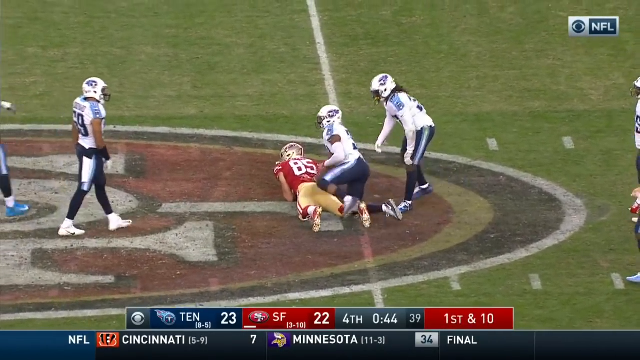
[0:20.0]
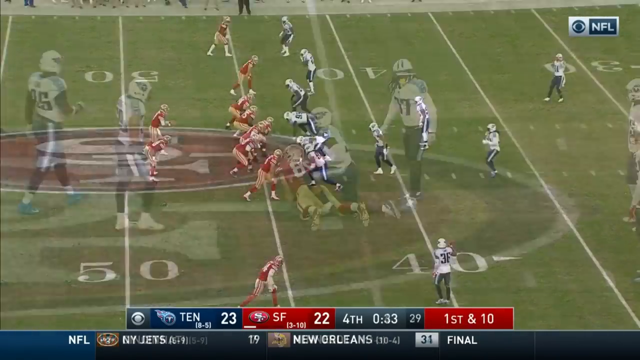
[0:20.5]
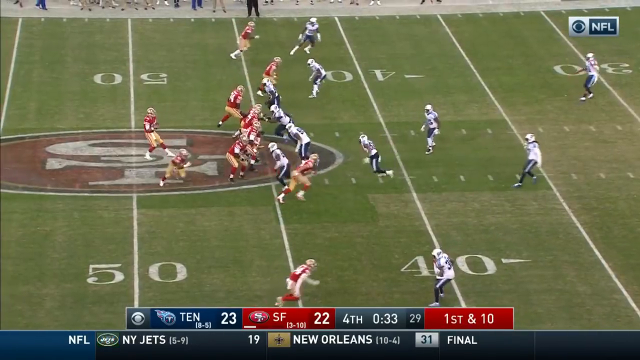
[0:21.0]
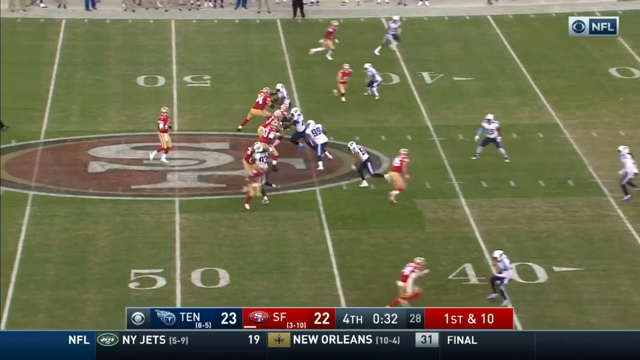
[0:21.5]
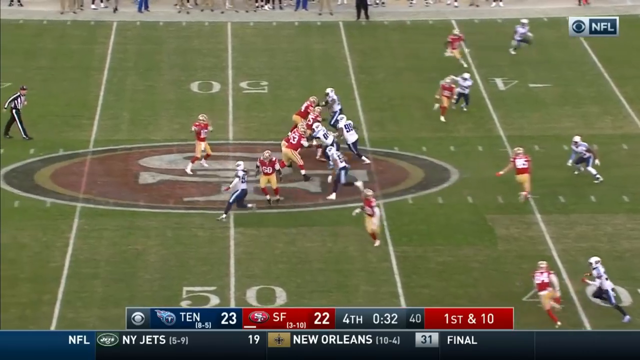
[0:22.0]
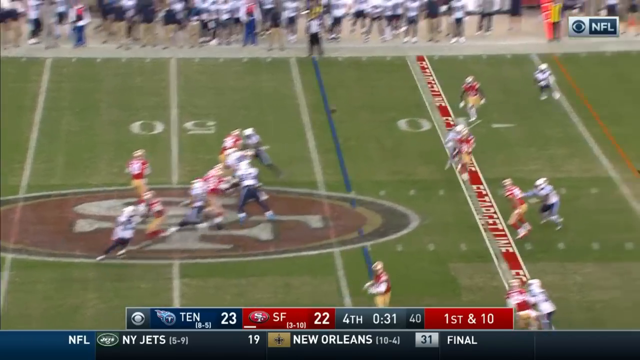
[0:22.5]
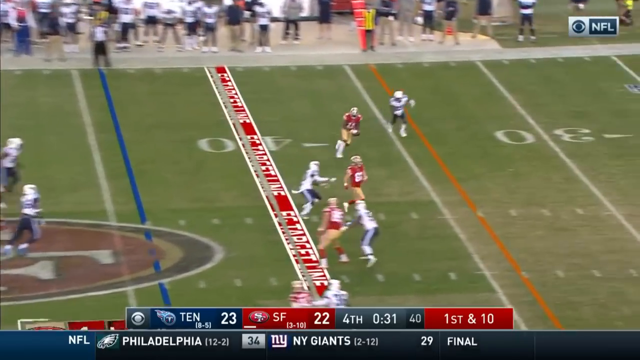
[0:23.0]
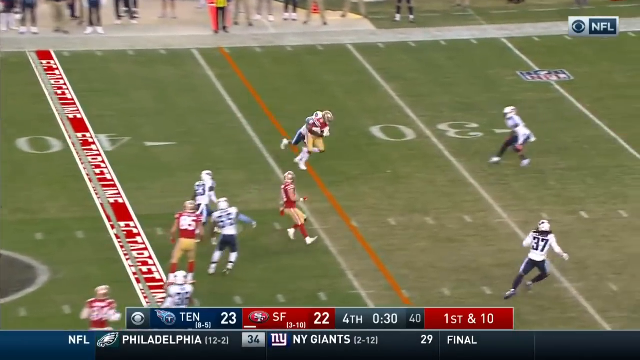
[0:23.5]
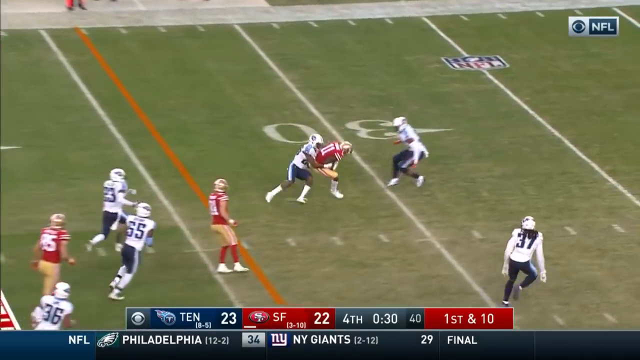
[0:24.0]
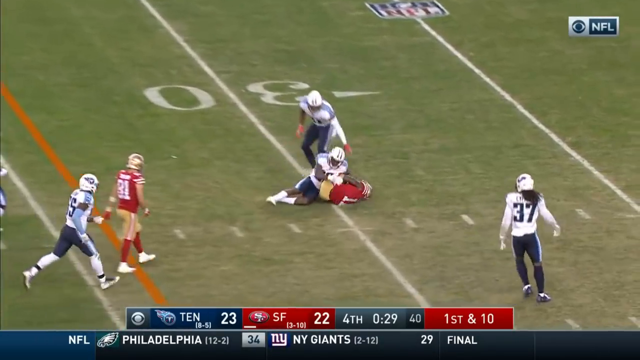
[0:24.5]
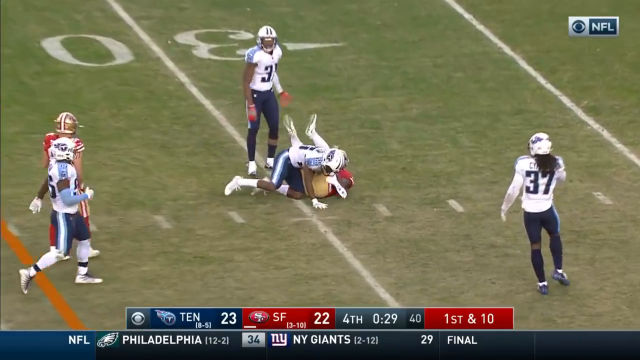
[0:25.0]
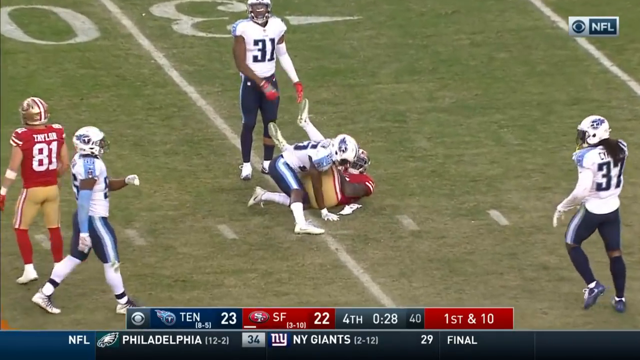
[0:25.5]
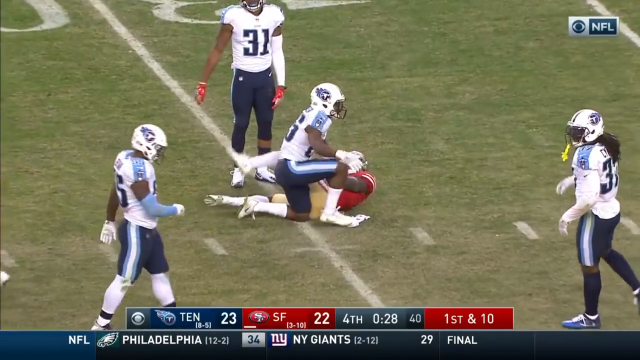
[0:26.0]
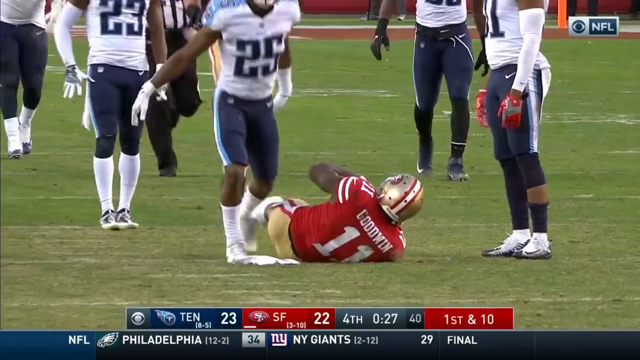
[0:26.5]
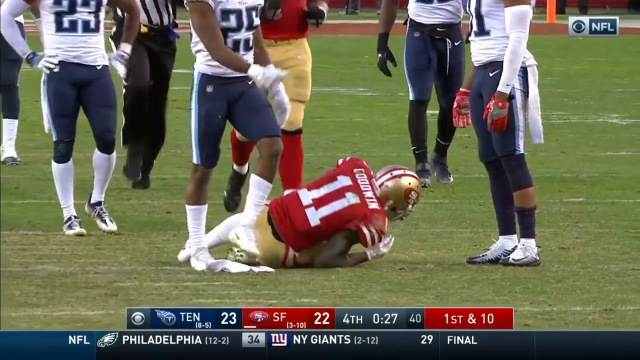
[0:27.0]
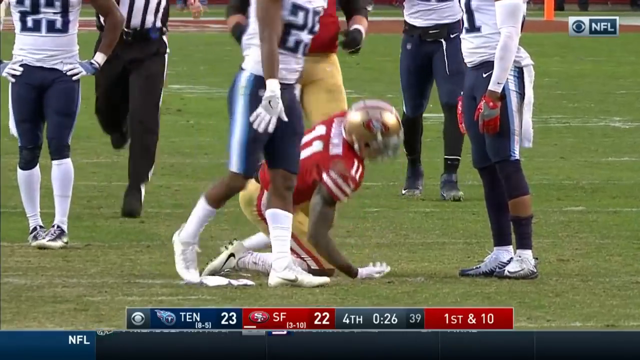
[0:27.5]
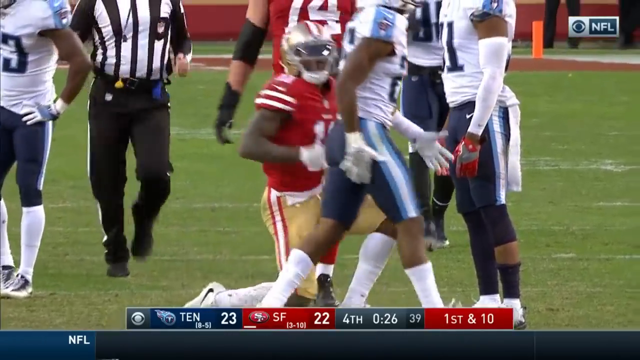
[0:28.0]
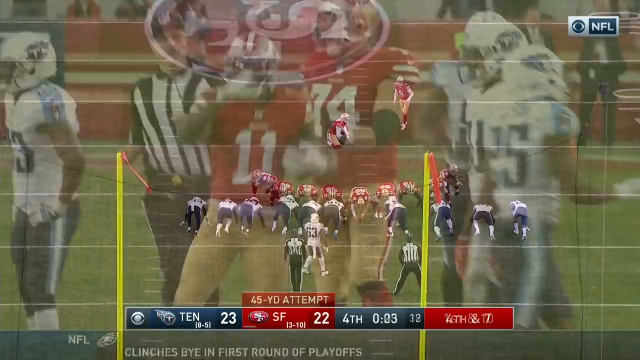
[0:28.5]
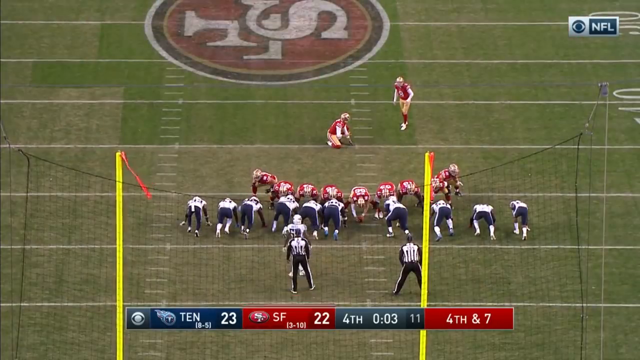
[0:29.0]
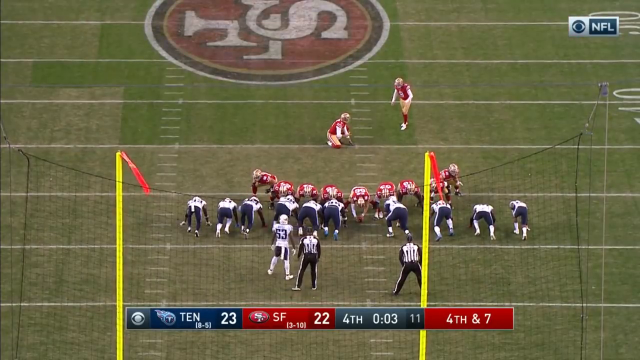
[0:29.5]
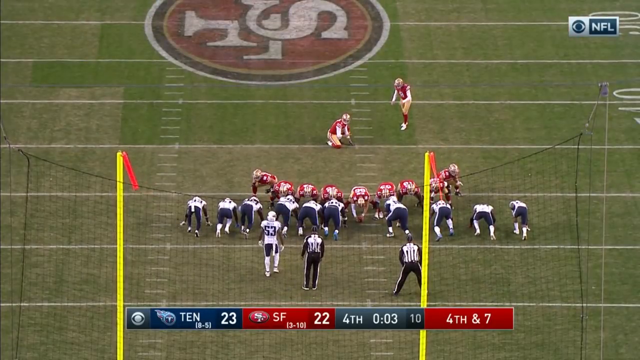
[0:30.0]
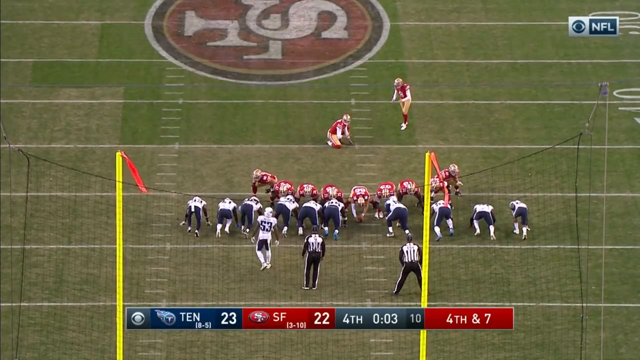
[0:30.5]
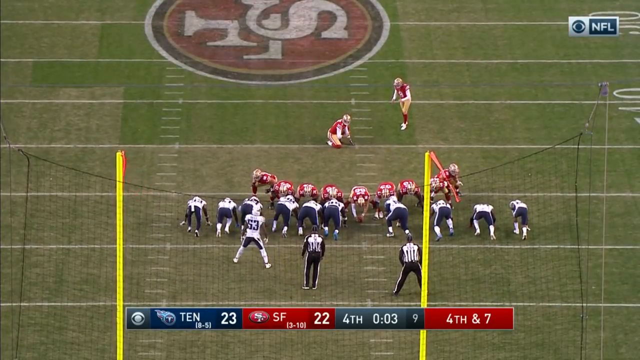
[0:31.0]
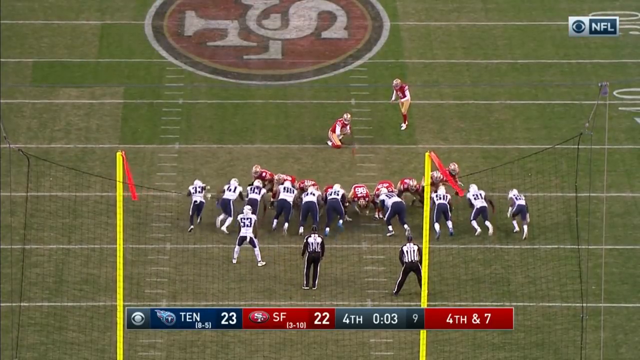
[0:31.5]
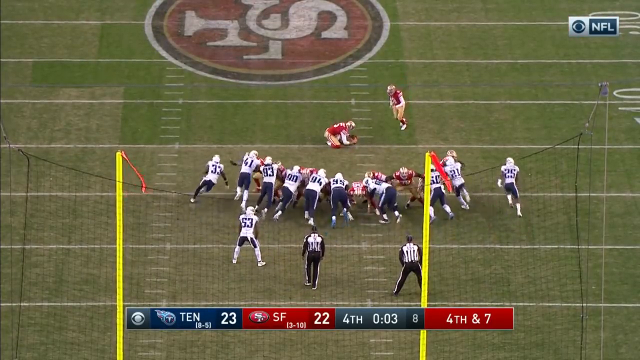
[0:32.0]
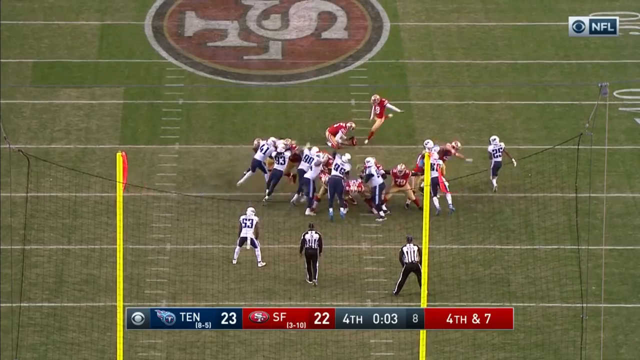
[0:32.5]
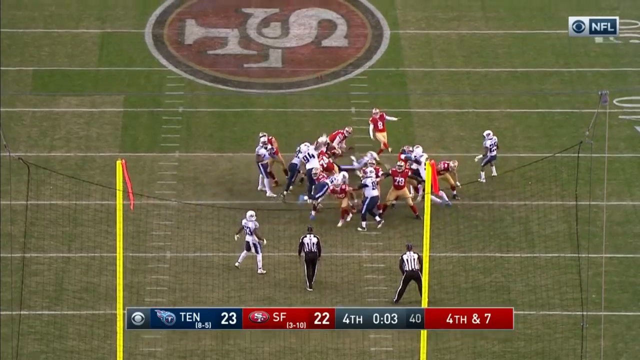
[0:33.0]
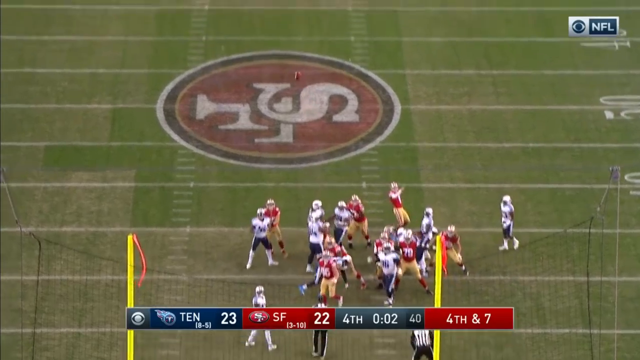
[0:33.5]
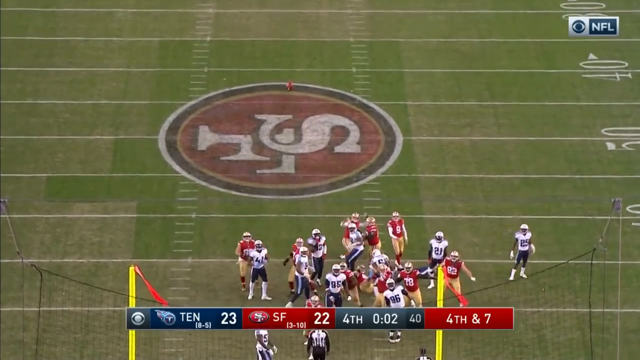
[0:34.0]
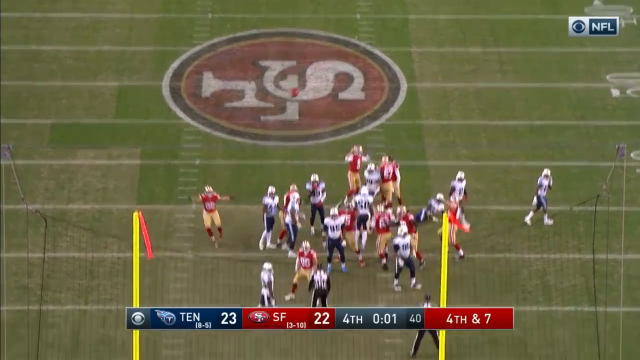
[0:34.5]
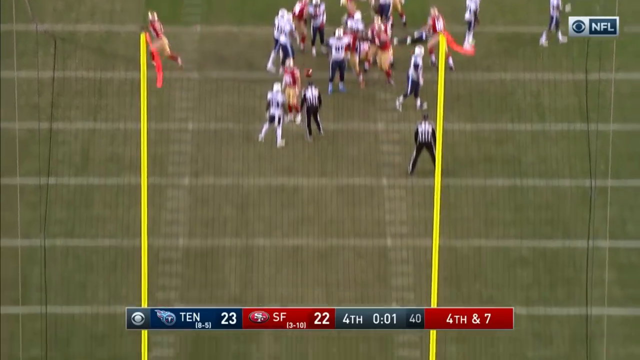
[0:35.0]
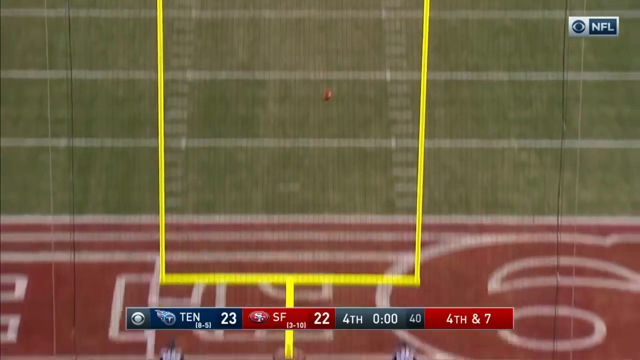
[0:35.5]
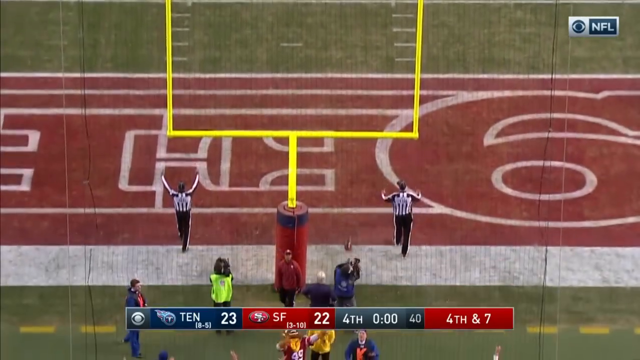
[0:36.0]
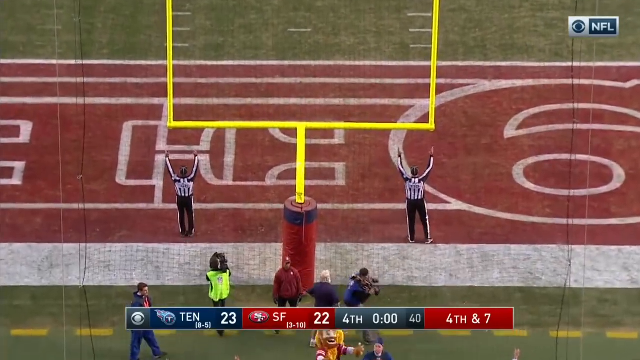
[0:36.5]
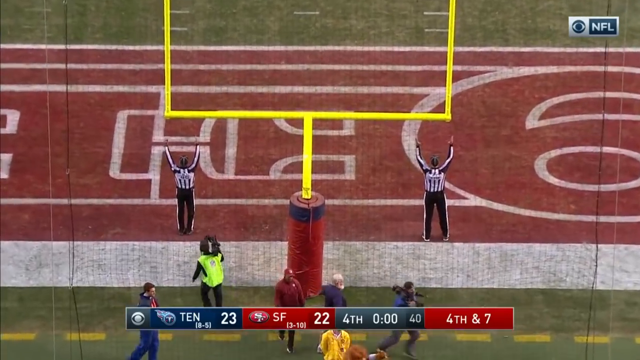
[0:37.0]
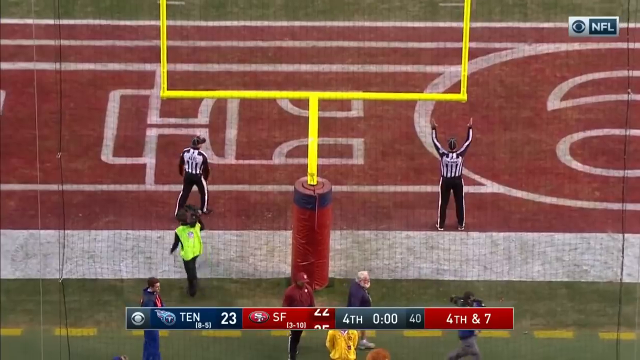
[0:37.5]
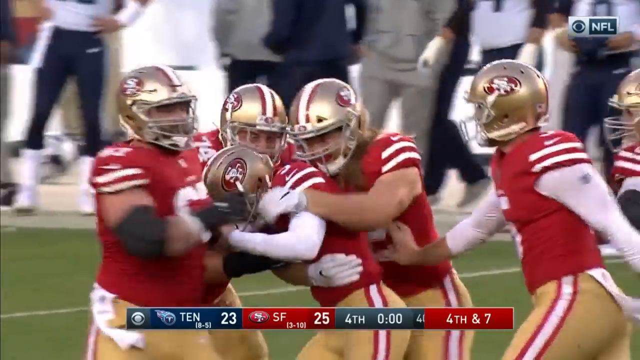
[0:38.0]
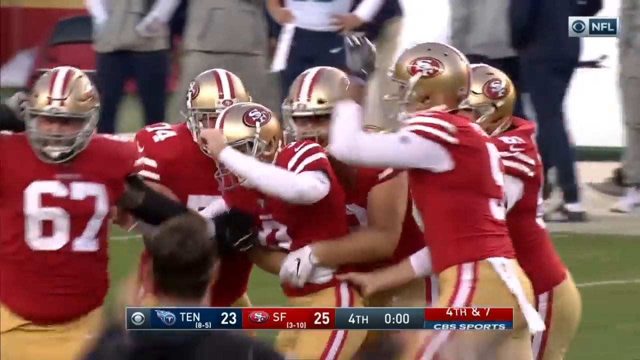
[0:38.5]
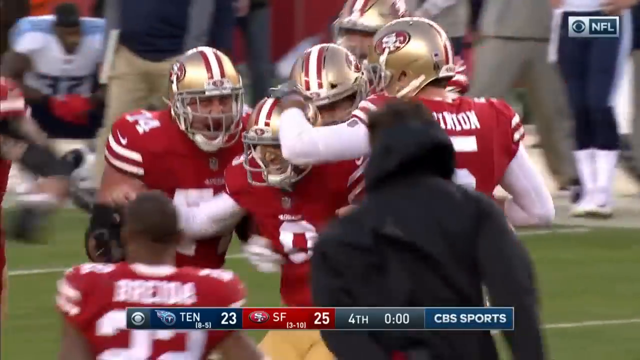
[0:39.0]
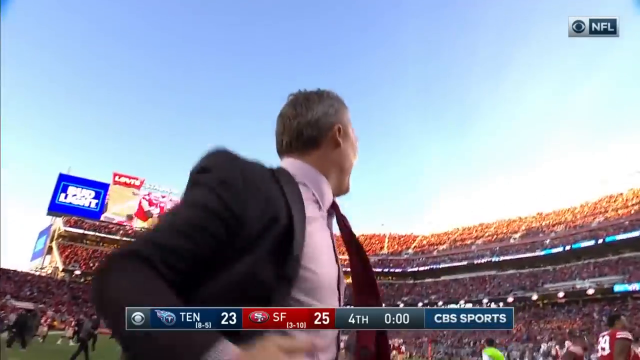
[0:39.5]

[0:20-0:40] In a football match between a team in red and a team in white, the red team have the ball in a line-out and pass it back to the quarterback. The quarterback takes a step backwards, slowly pulls back the right arm and then propels the ball forward to their left. Somebody on the left catches the ball side on, takes it to the chest, turns and runs, but a white player grabs them from behind and they go over. The player wears number 11. The video cuts to a view from behind one of the goals for a kick. A player in red stands ready to strike the ball, right foot placed behind the left foot, hands slightly in front, body slightly bent. A player kneels in front of them, holding the ball down with one hand. Between the camera and the goal are a number of players: the red players face the camera, bent forwards with their hands touching the ground, and players in white with black trousers face them, also bent down, ready to sprint forward. They are still as they await the kick. One player, wearing number 53, is behind this group, walking between the back line of the white team and the goal. The players in red stand their ground, kneeling down, trying to block the others off. The kicker moves forward to the ball, left foot placed in front with the knee bent, then the back foot steps up and swipes at the ball. The ball goes up and over the goal, and a point is scored. The camera follows the ball as it flies over the goal. The two umpires by the goal both hold their arms straight up over their heads, signalling that points have been scored. The players in red jump around on top of each other, celebrating, with the kicker in the centre; some of their hands touch the top of his helmet.